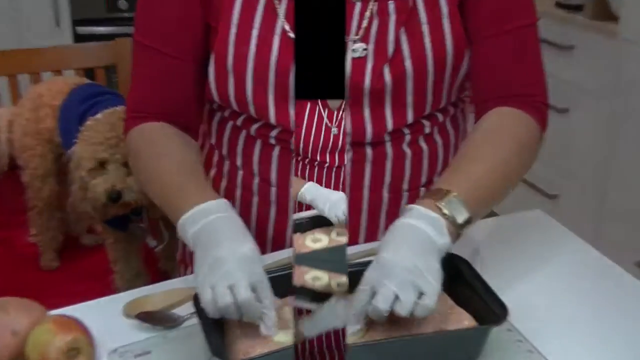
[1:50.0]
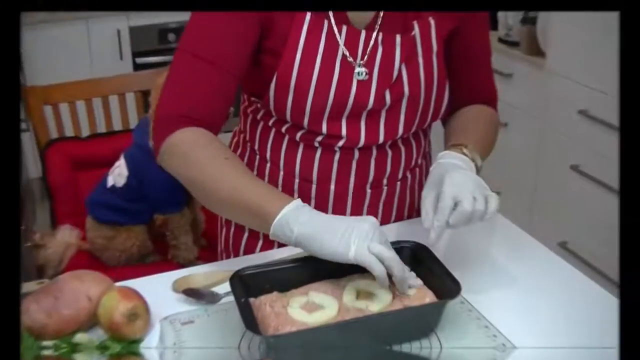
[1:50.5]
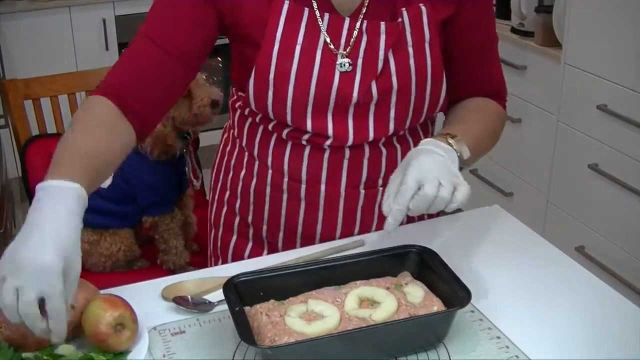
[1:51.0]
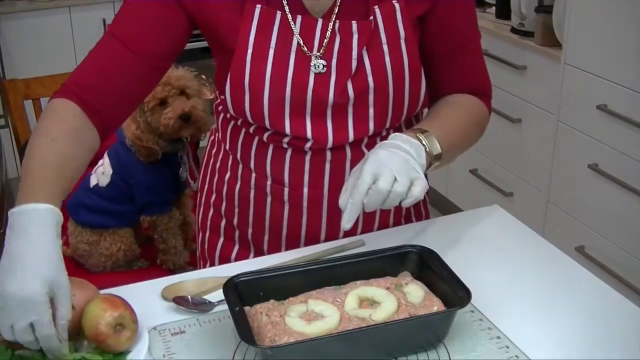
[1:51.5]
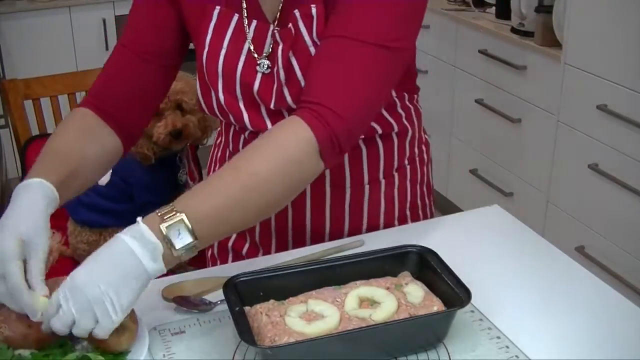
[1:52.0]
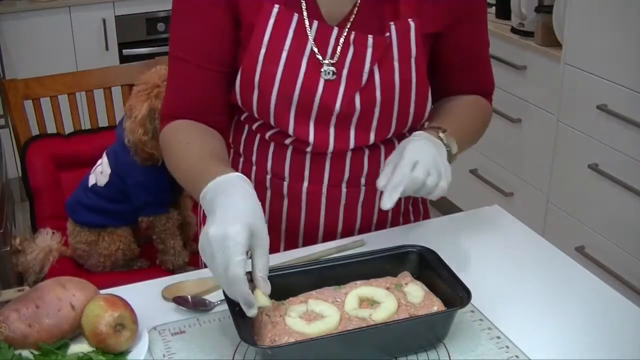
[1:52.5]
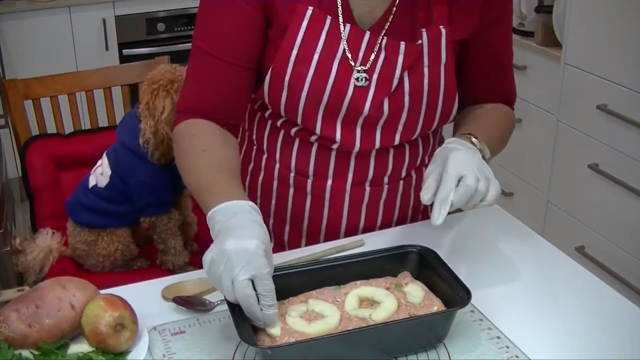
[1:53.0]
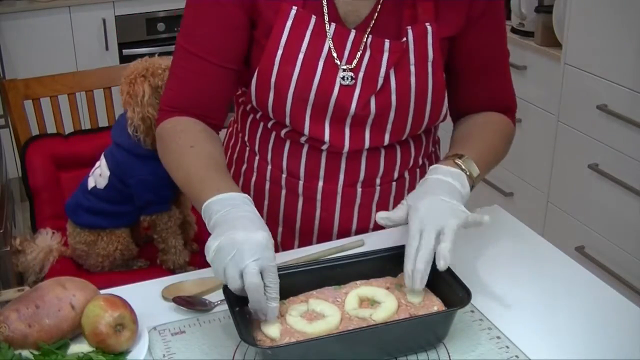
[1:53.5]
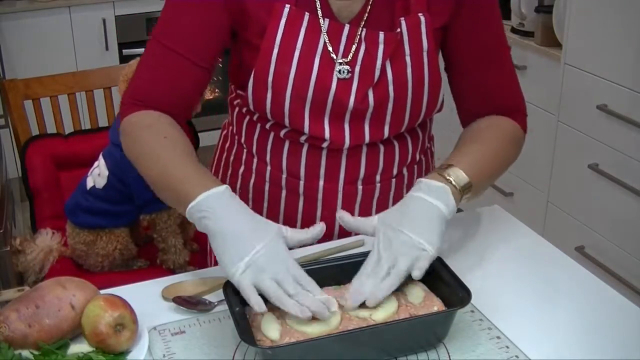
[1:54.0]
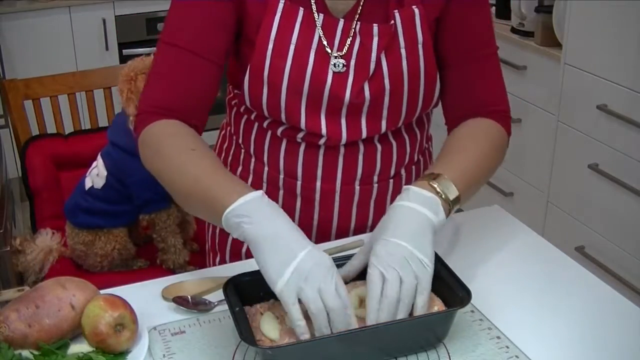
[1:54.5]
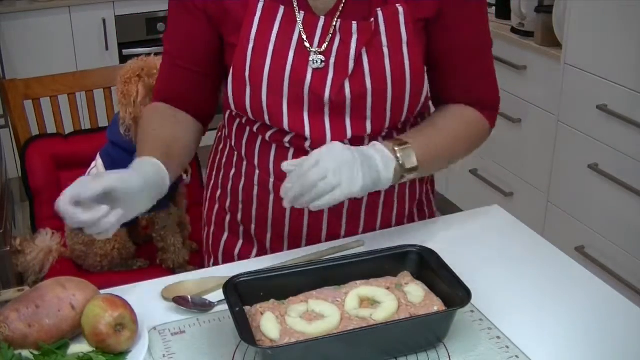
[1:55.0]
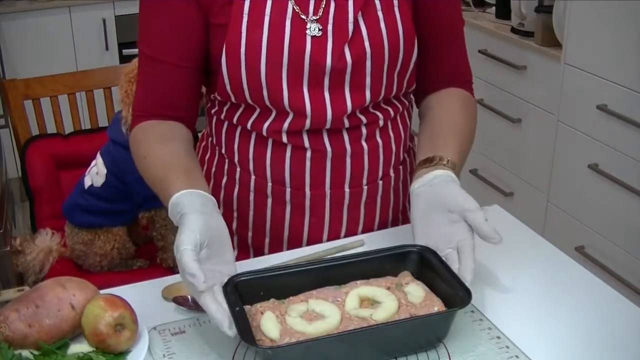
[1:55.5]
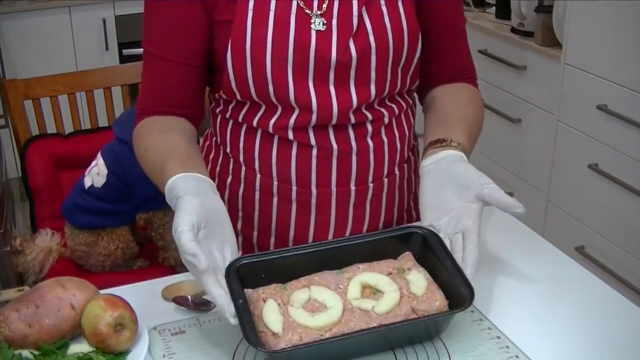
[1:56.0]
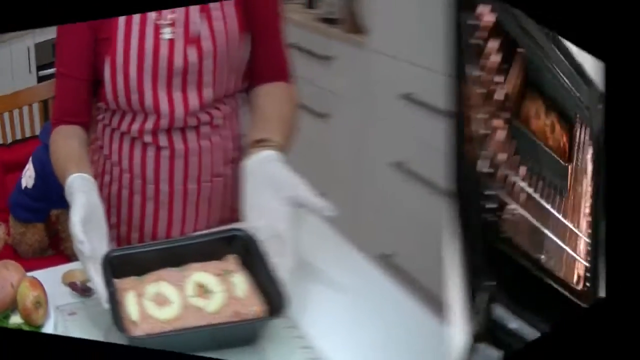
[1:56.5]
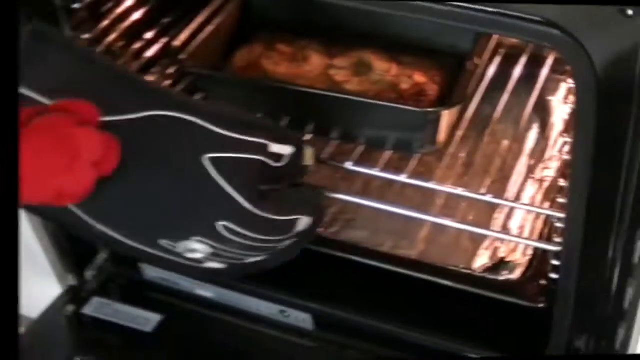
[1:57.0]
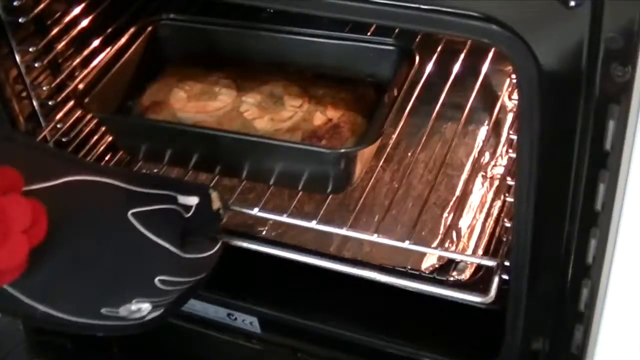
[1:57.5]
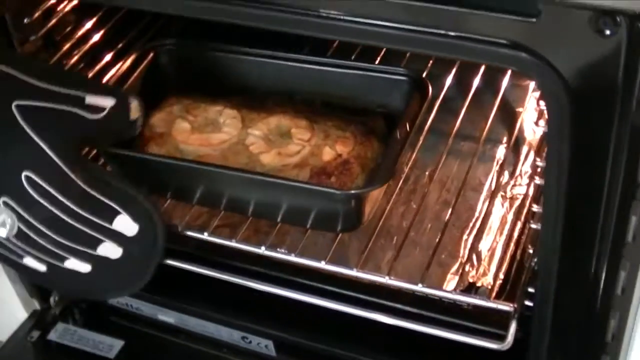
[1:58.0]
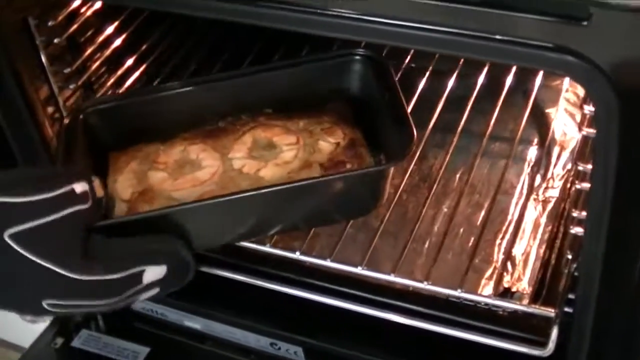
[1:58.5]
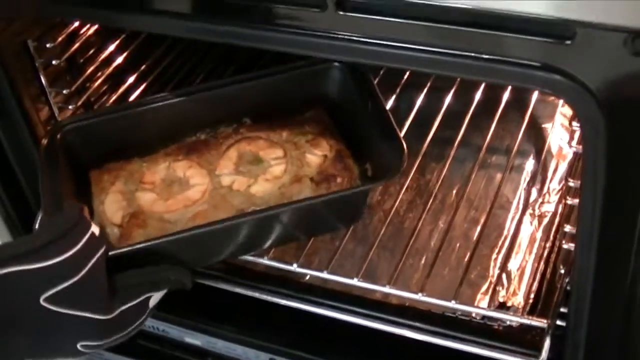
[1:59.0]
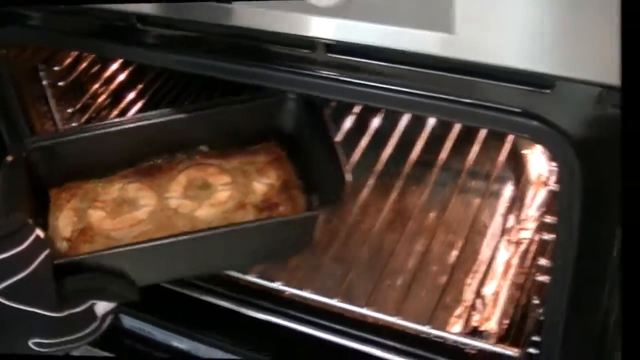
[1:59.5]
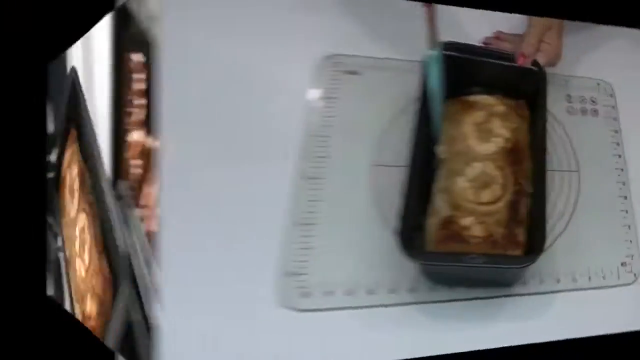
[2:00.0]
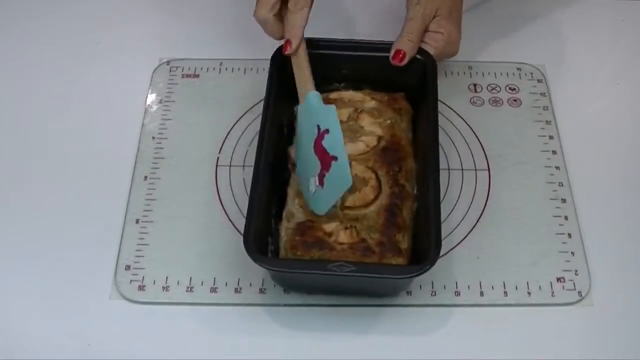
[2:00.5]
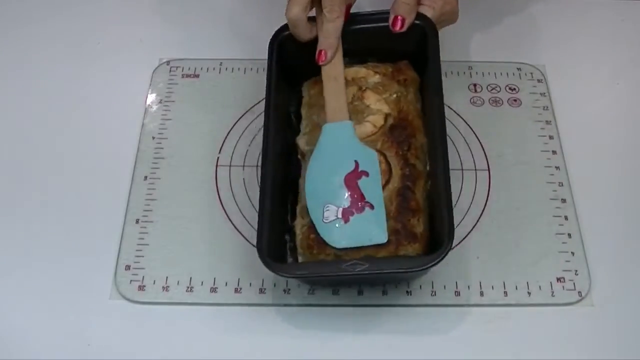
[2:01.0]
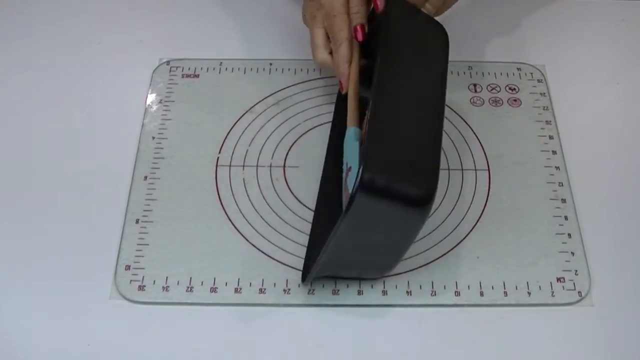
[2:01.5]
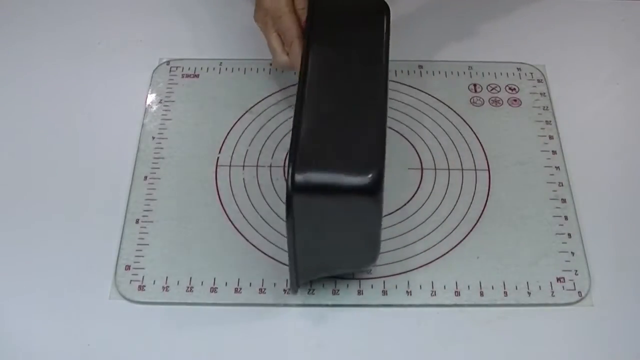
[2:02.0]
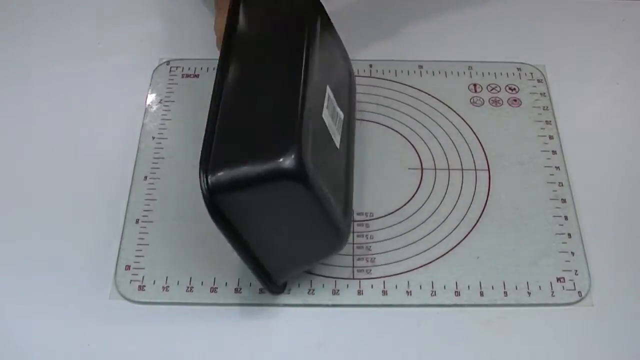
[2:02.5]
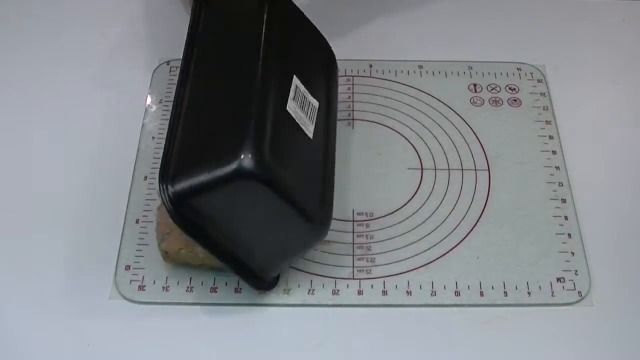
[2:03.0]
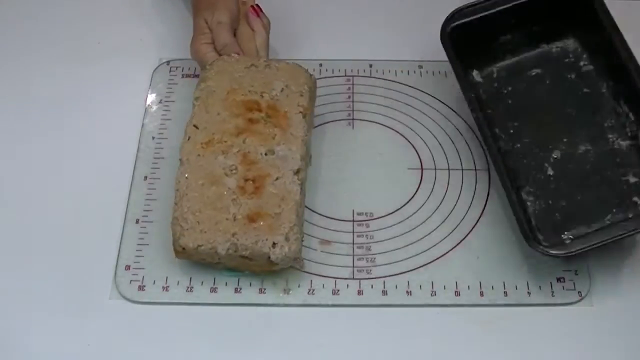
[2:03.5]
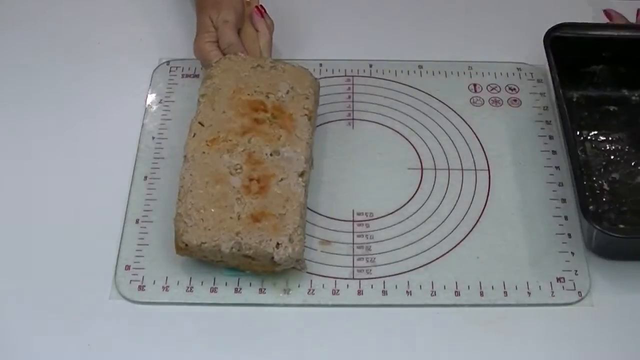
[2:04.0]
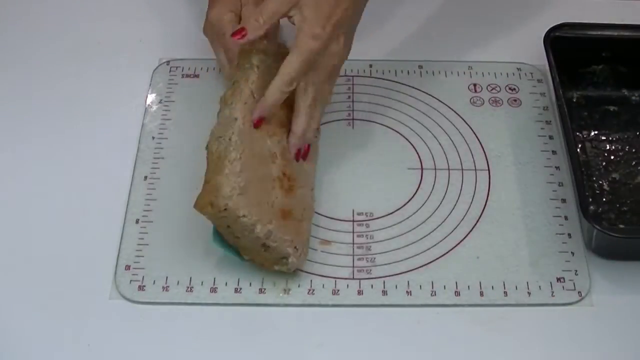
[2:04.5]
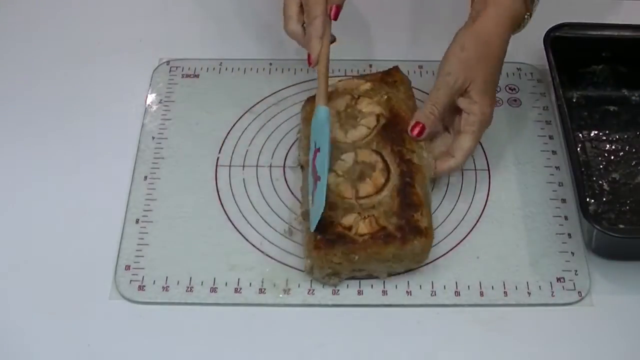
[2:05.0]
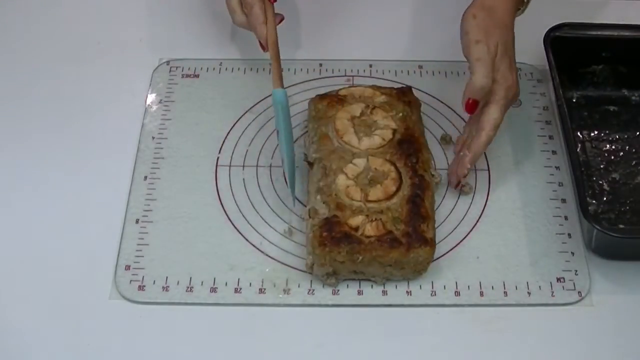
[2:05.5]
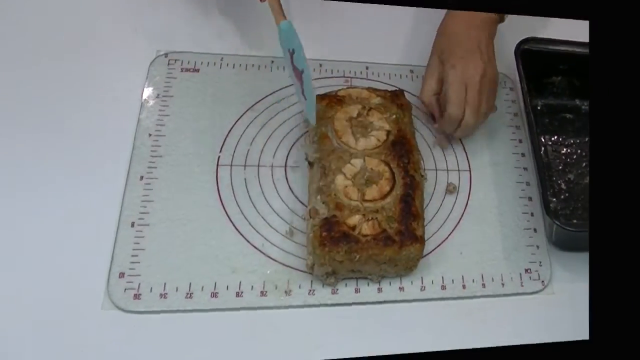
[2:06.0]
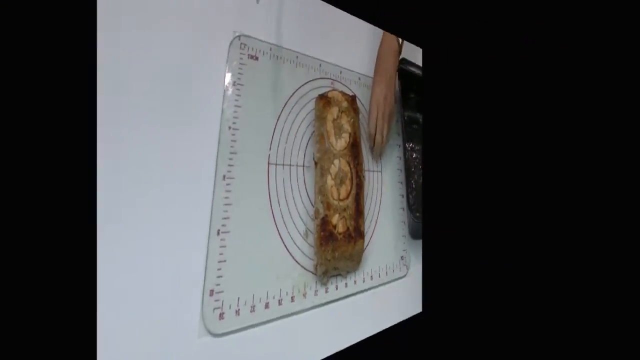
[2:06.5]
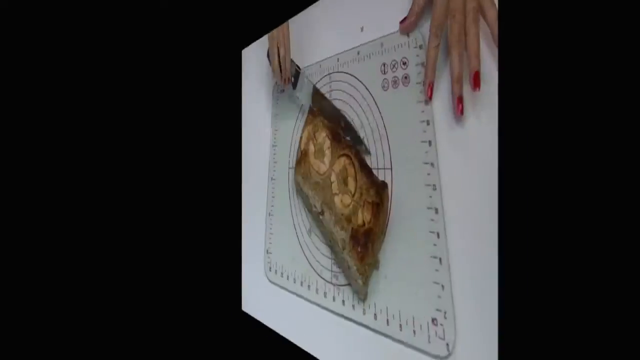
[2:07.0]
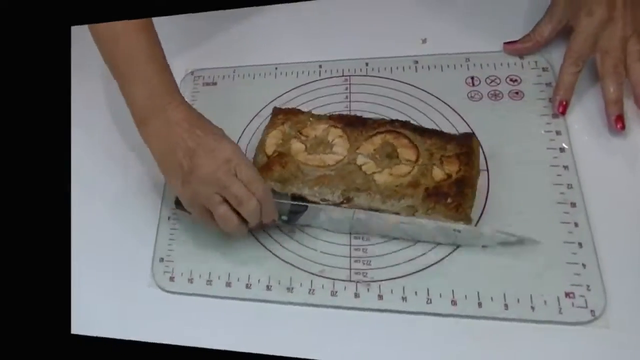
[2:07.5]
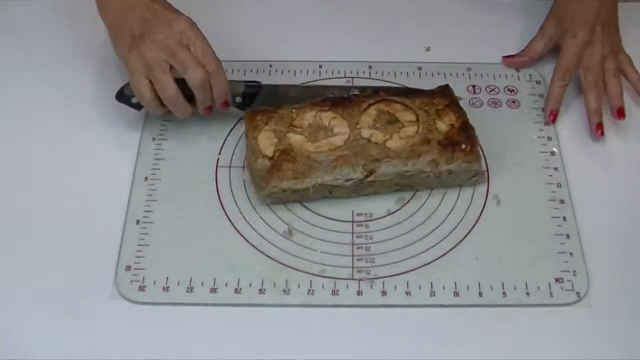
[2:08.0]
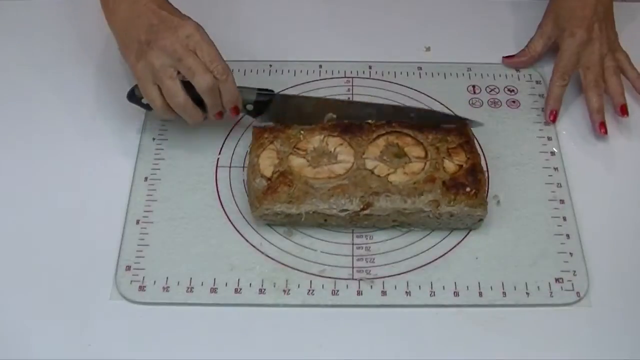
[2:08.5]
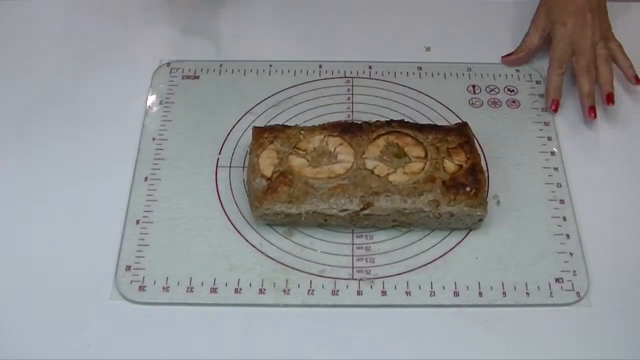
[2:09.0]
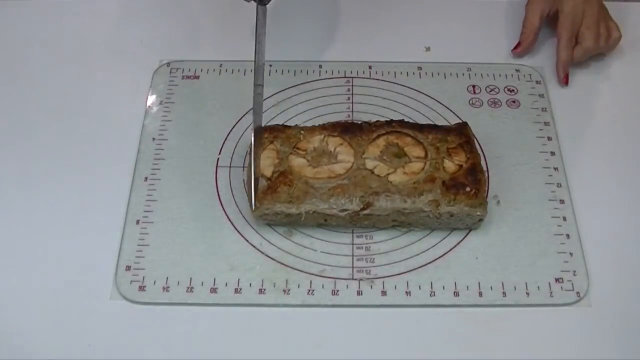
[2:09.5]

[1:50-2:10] A lady in a red top and a red apron with white lines down it appears to be handling a rectangular black pan containing what looks to be a flattened mixture of ingredients, placing pineapple on top. In the background, a brown dog in a blue sweater with white writing on it sits on a red cushion placed on a brown chair. She puts several pineapple slices on the mixture, two in the center and part of one on either side, and when finished she lifts the pan up and shows it directly to the camera. In the next shot she wears a black oven mitt and pulls the same pan out of the oven, with the mixture looking to be already cooked. The cooked mixture in the black pan is then shown on what looks to be a plastic mat on a white table; only the lady's hands are visible as she uses a wooden spoon that is blue on the end with what looks like a drawing of a dog in red wearing a white chef's hat. She turns the pan upside down onto the plastic mat, revealing the mixture packed together in one rectangular shape, then turns it over to show the cooked pineapple on top. From another angle, the lady has a knife in her hand and looks to start cutting the cooked mixture, which looks like meatloaf.